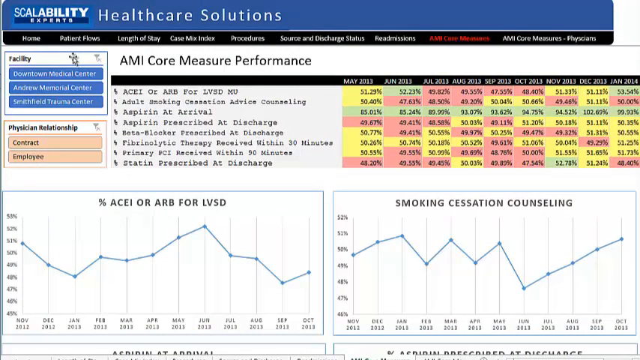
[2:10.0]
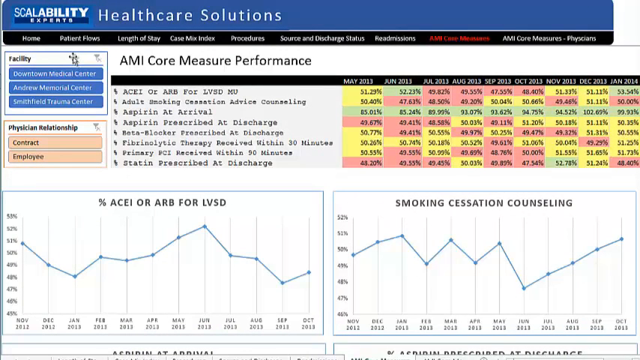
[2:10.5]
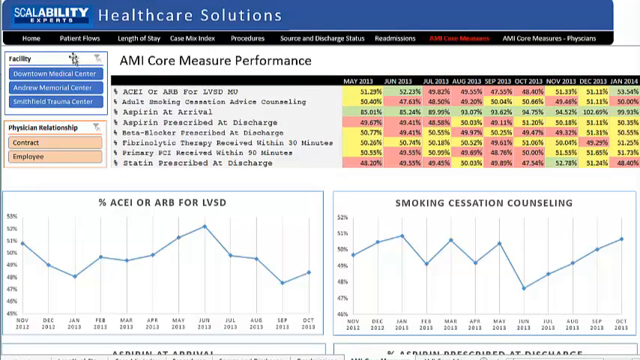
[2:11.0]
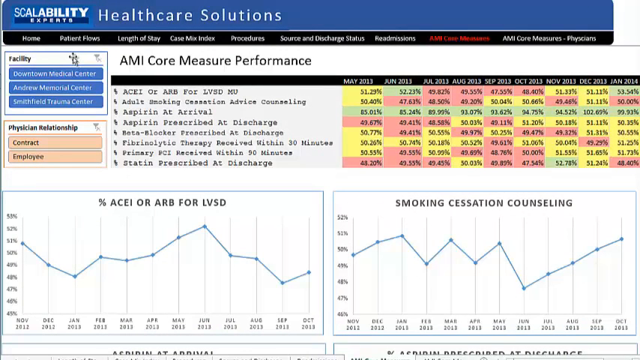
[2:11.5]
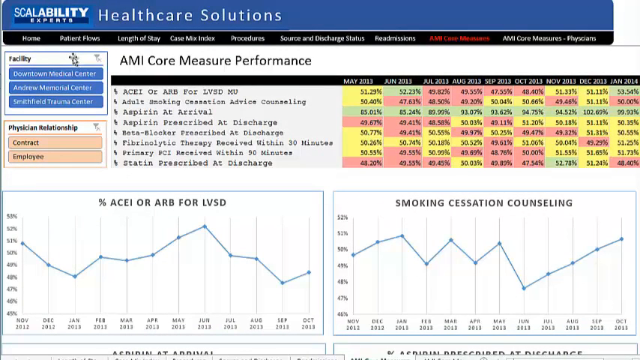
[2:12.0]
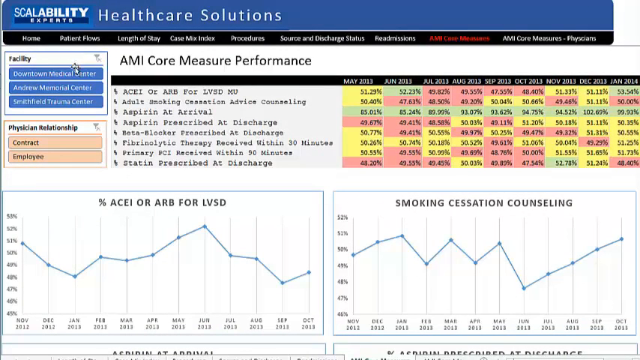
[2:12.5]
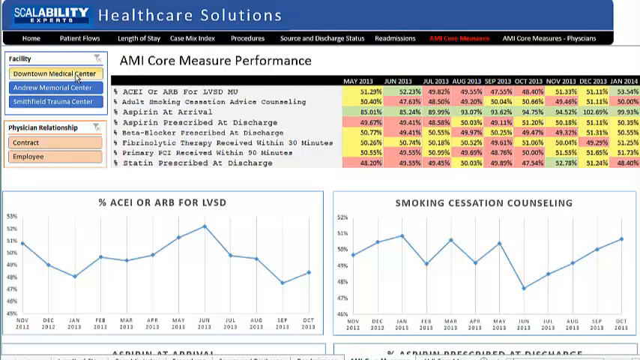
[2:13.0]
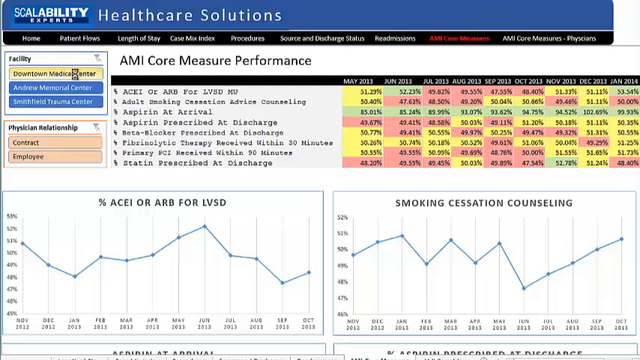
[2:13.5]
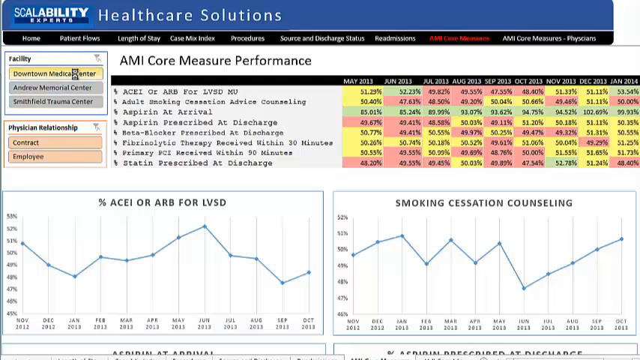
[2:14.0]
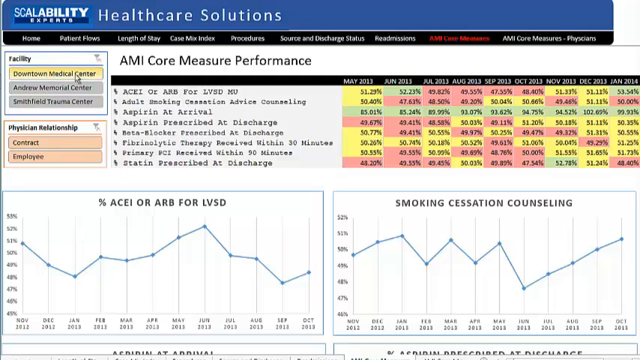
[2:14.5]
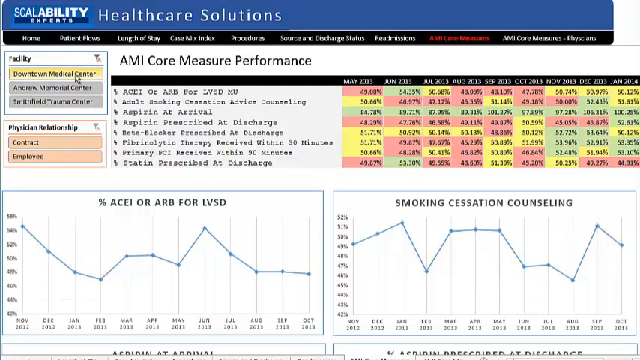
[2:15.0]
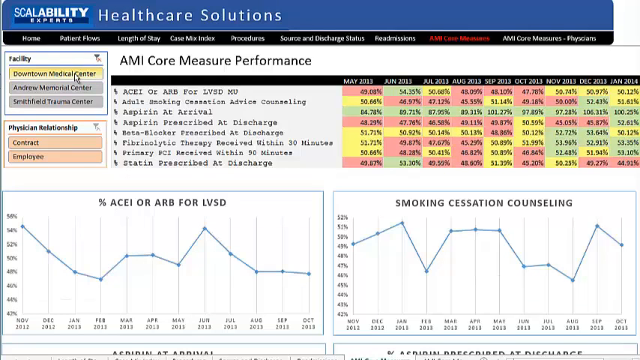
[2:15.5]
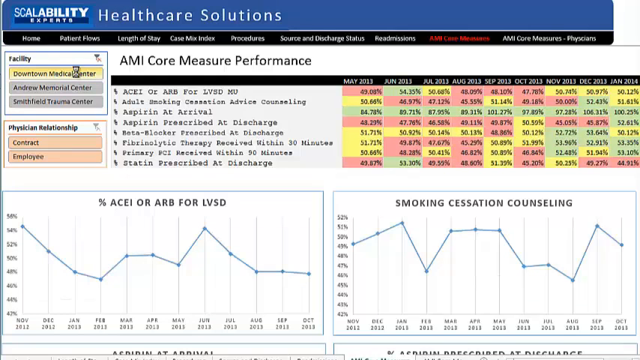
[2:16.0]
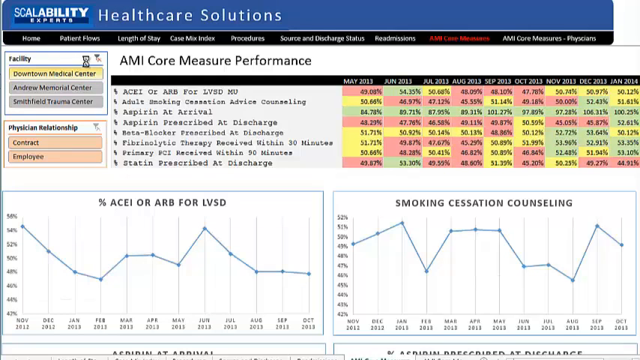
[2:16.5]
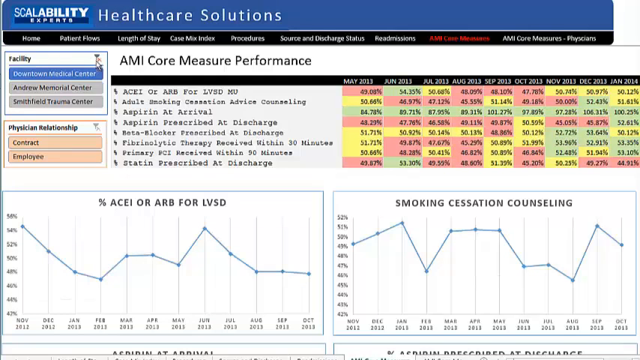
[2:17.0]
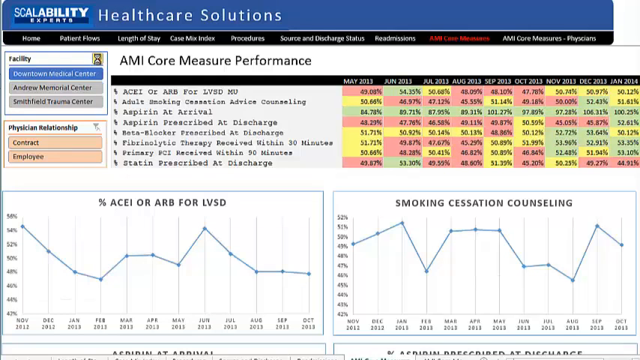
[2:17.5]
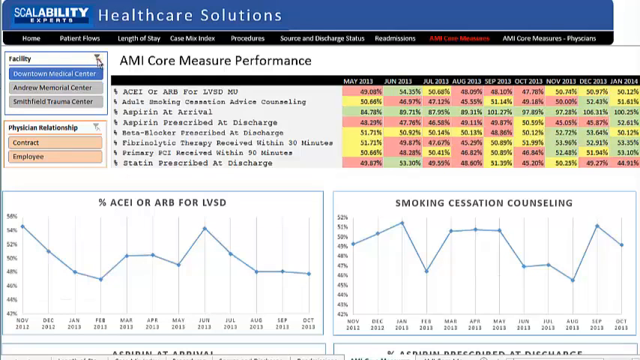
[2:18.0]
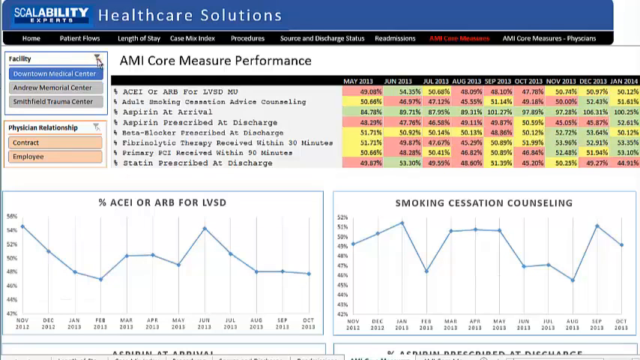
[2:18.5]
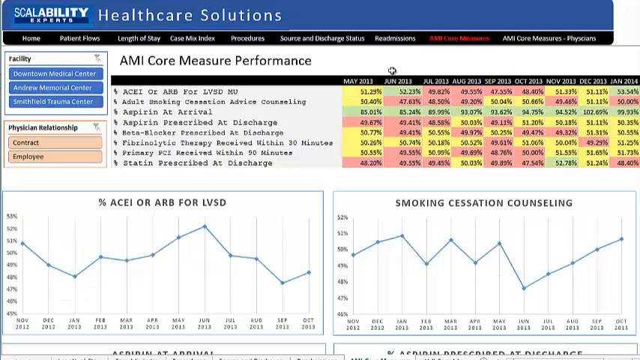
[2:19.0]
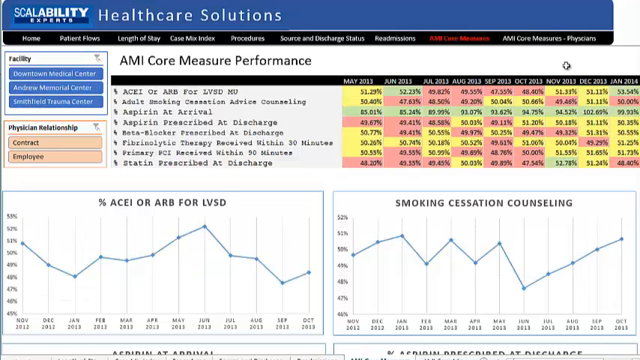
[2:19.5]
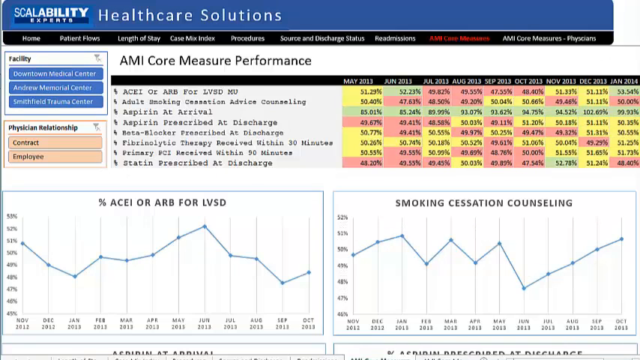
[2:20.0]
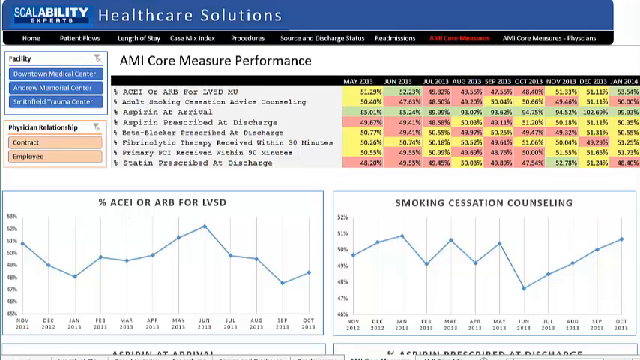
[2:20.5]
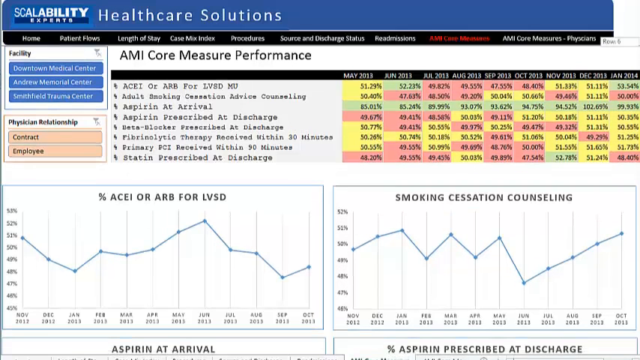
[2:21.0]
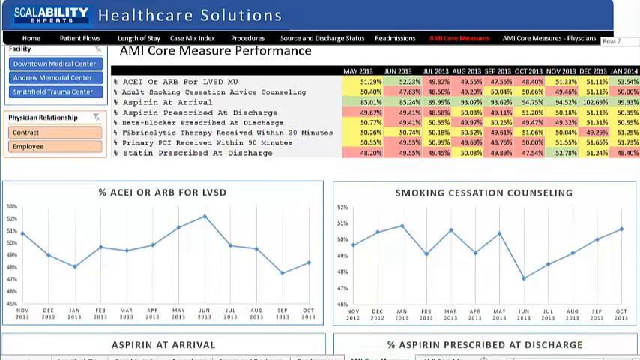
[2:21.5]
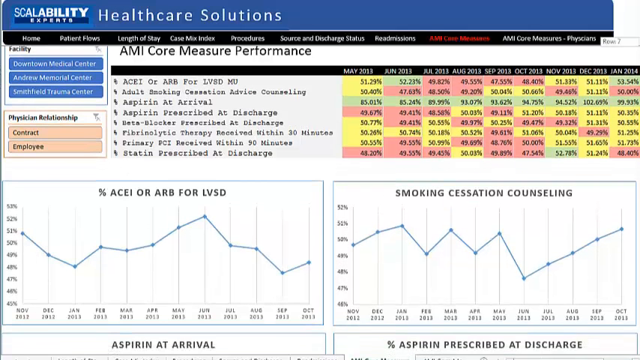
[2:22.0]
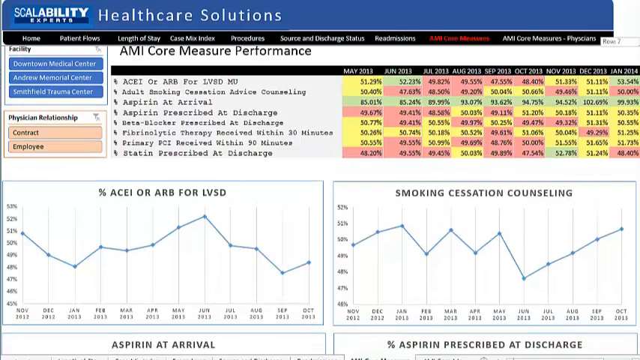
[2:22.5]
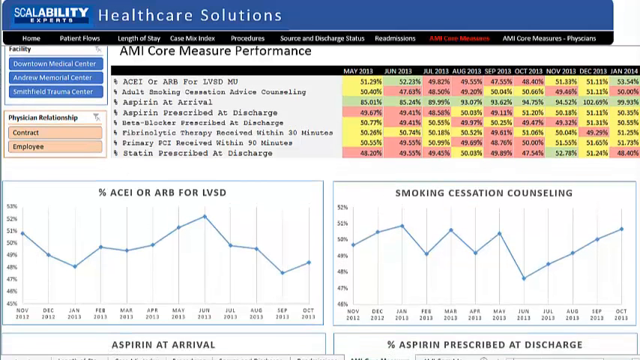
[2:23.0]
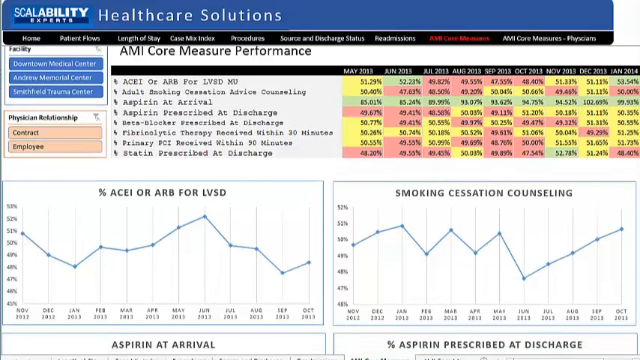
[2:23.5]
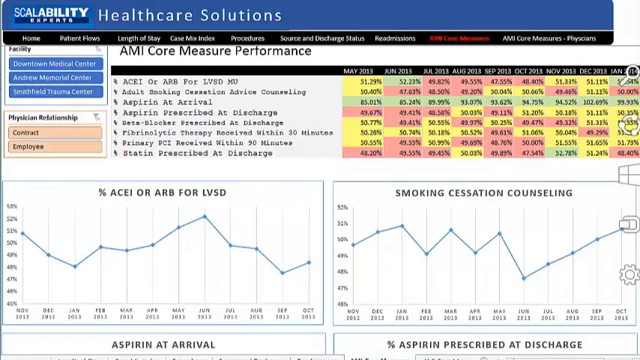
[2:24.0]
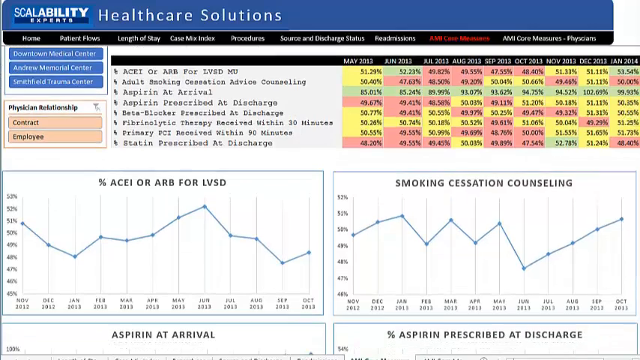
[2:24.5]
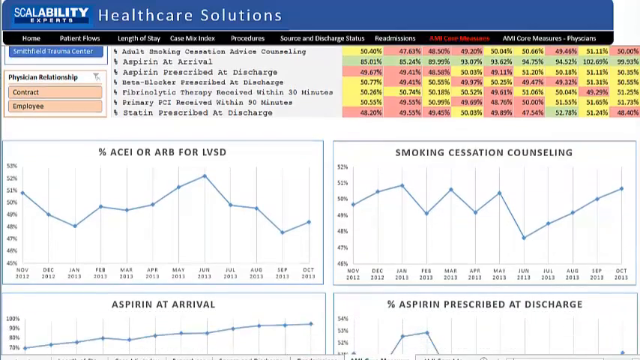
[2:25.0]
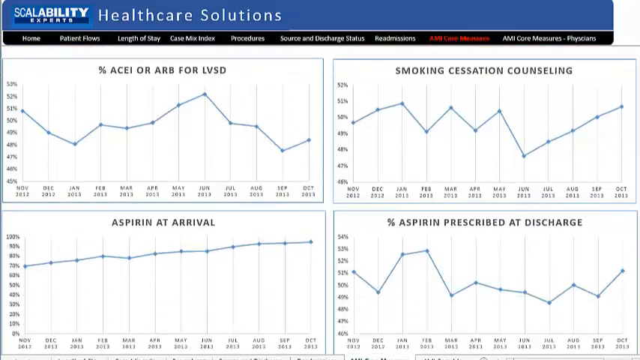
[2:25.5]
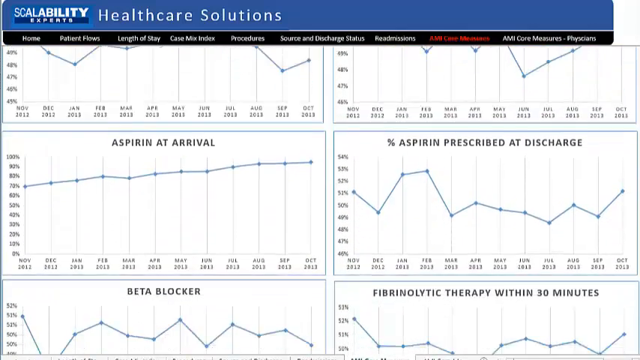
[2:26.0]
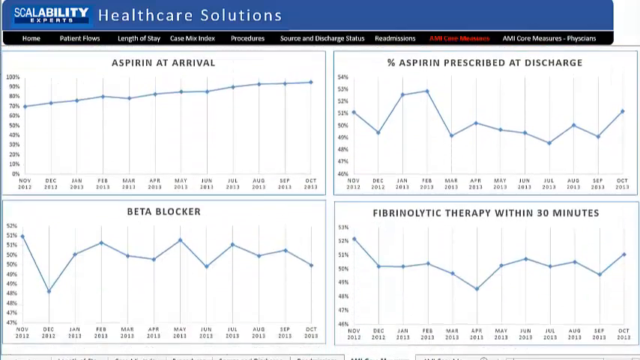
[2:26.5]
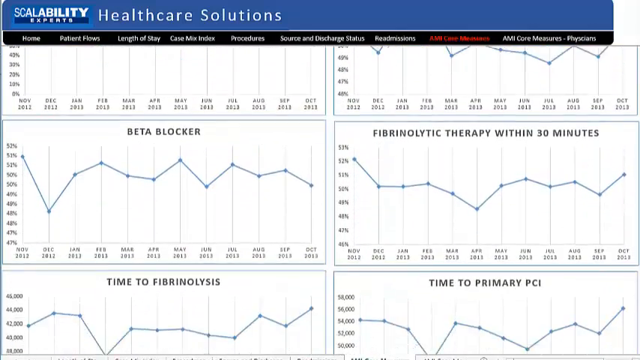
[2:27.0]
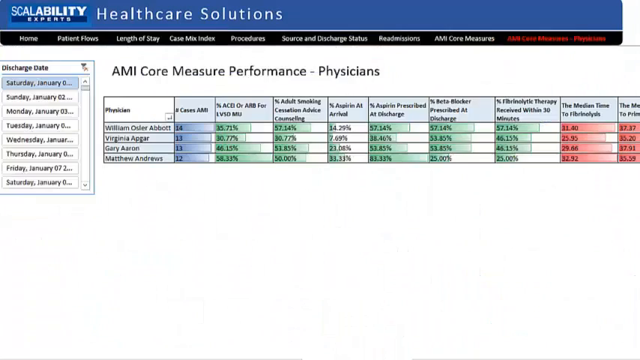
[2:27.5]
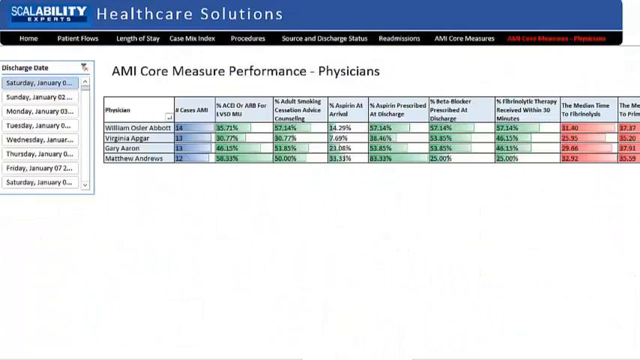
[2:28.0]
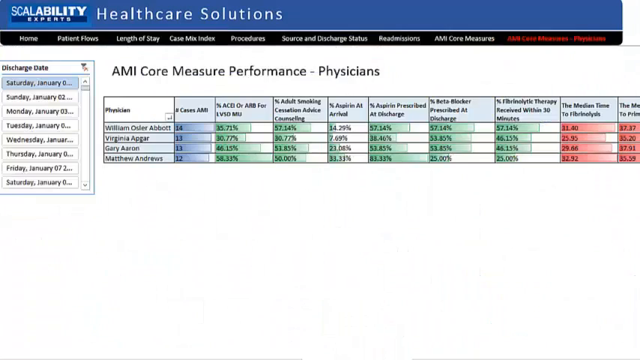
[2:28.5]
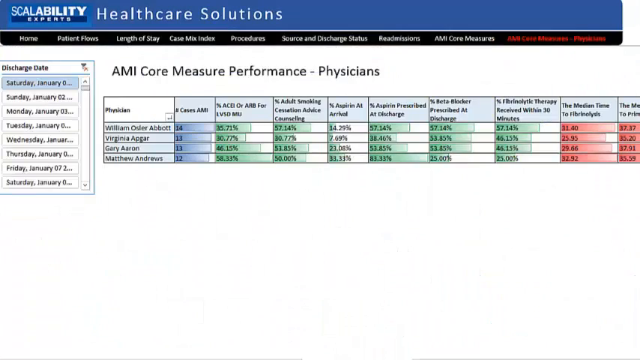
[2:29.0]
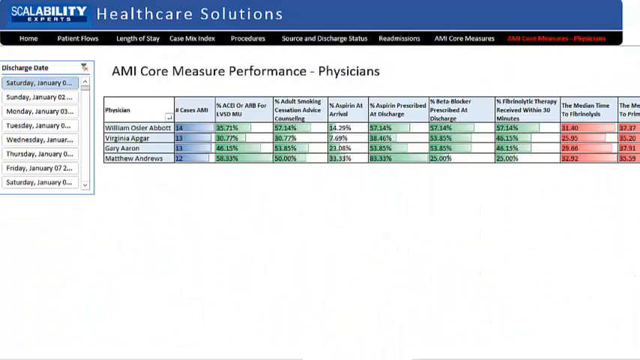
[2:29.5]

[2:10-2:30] The chart becomes clearer: the haziness behind it is gone, and the chart stands alone in the frame except for the title board above it, which reads "Scalability experts healthcare solutions" on the left-hand side of a medium blue banner running the full width of the video. Below is the same chart, with additional writing that was there before but unreadable because of the blurred background now visible. The chart seems to be titled "AMI core measure performance". The columns and their data all have percentage signs, and the colors remain yellow, green or pink, with no reason given for the colors. There are eight row descriptions to the right of the columns; each row has the same columns but different numbers and a different title.